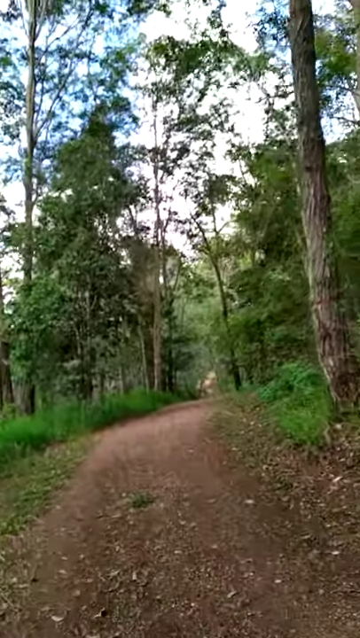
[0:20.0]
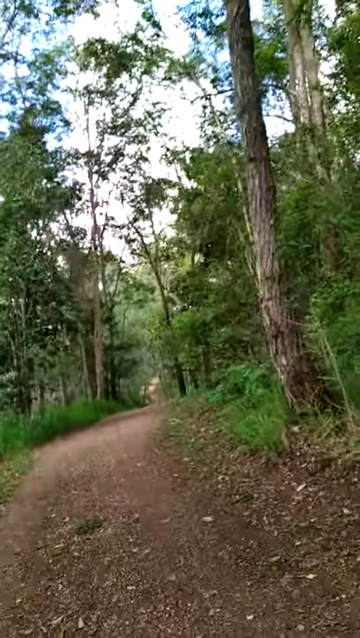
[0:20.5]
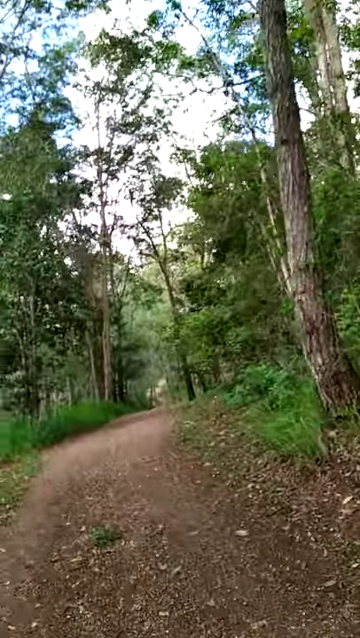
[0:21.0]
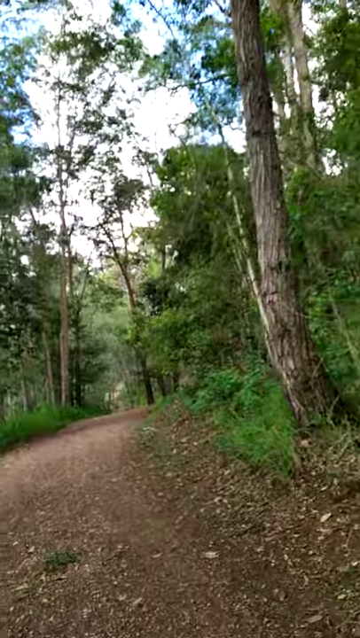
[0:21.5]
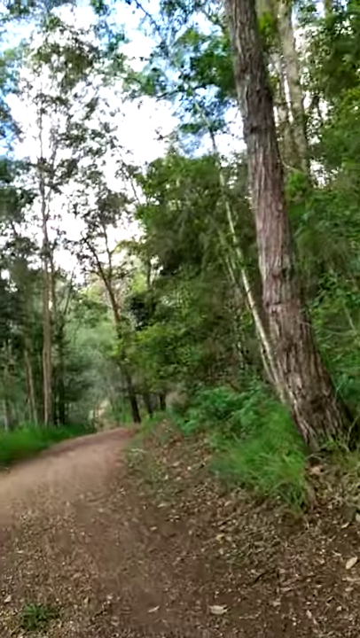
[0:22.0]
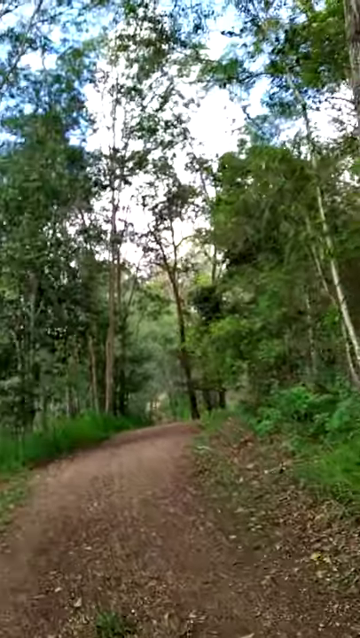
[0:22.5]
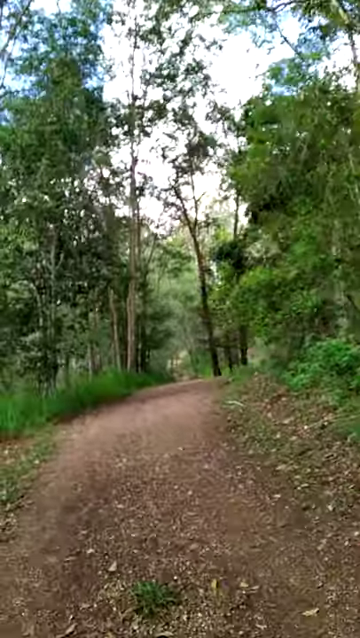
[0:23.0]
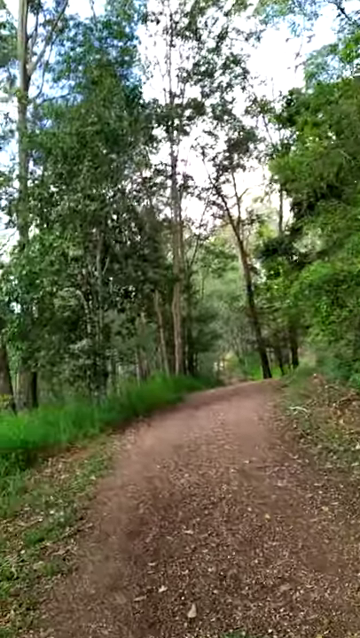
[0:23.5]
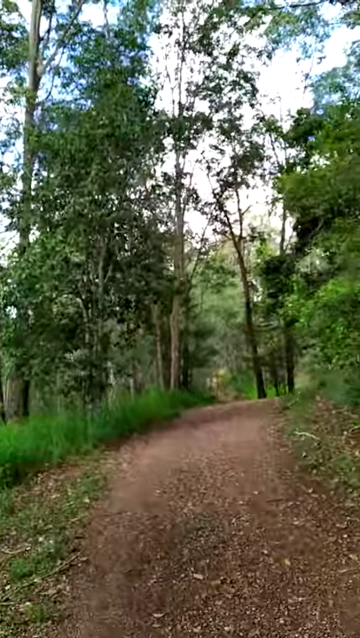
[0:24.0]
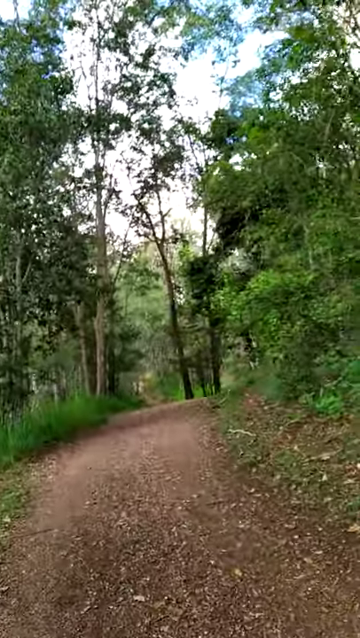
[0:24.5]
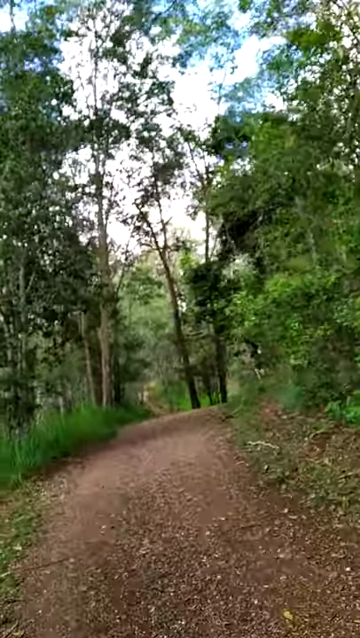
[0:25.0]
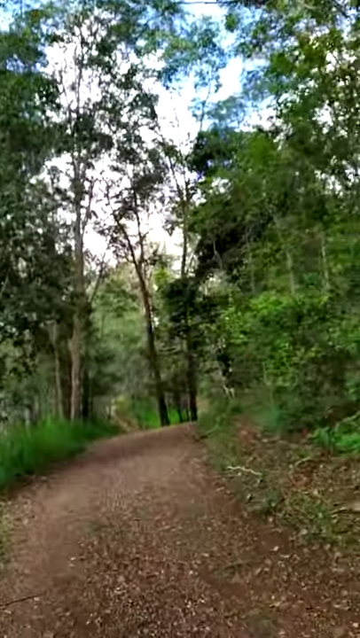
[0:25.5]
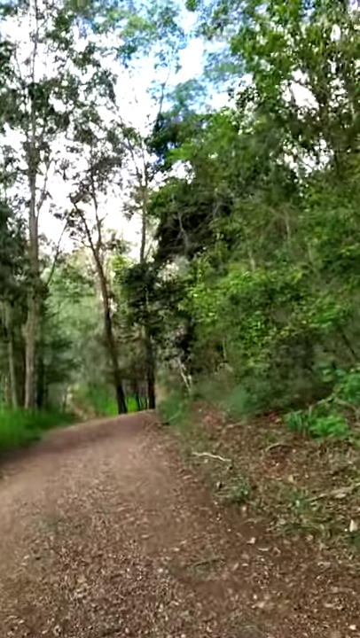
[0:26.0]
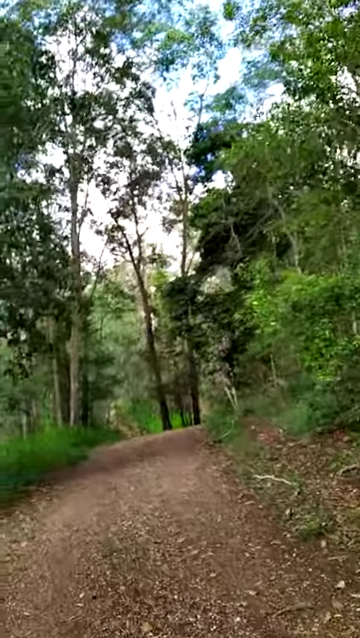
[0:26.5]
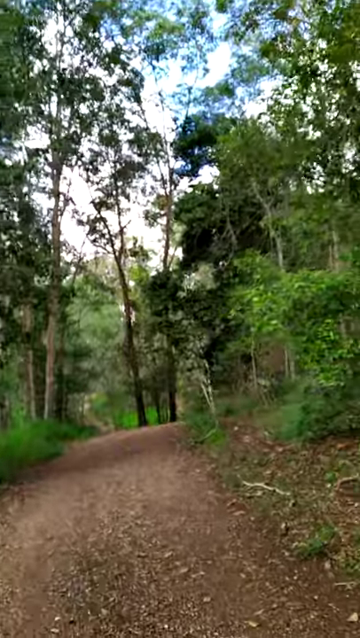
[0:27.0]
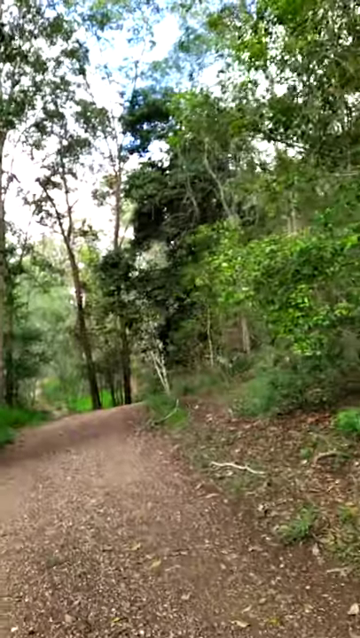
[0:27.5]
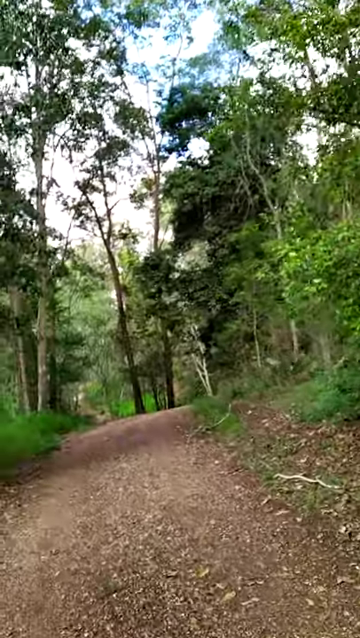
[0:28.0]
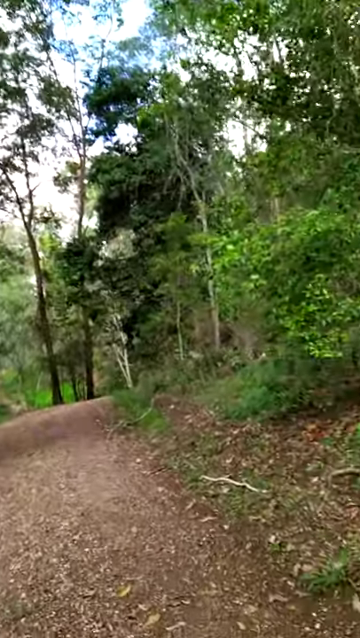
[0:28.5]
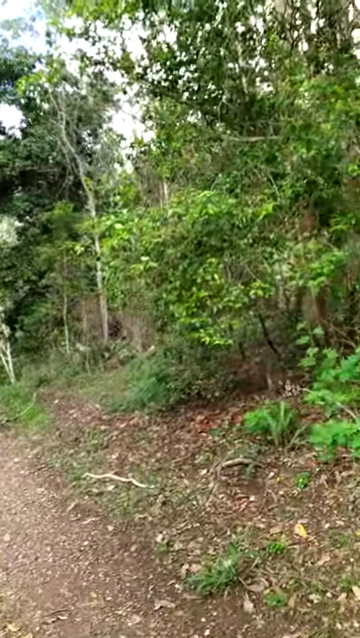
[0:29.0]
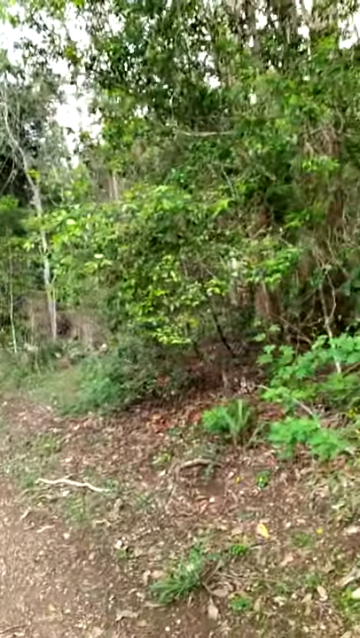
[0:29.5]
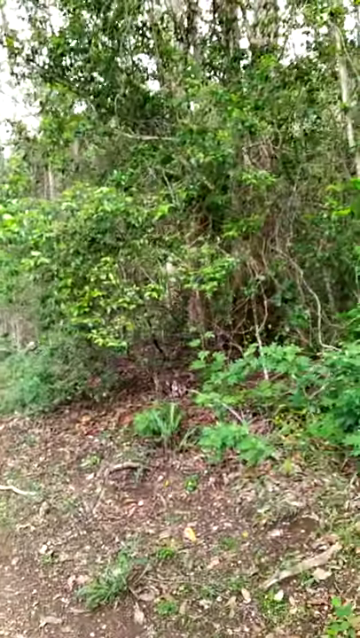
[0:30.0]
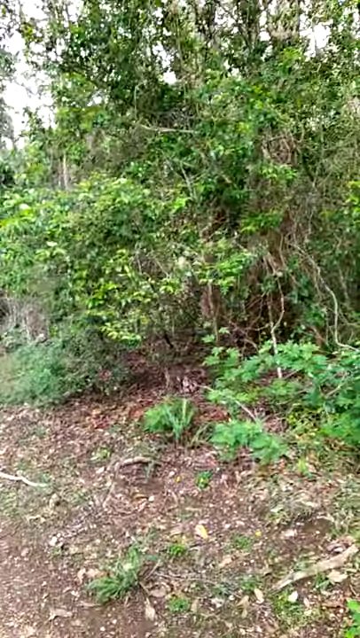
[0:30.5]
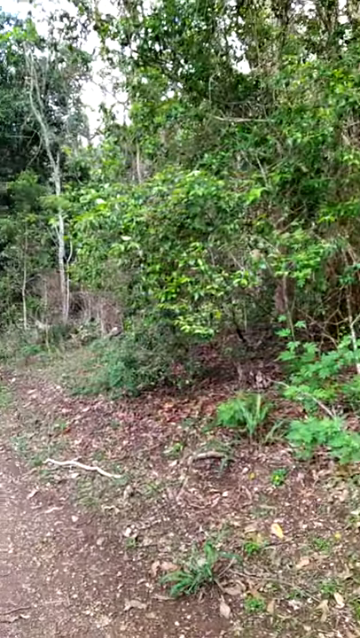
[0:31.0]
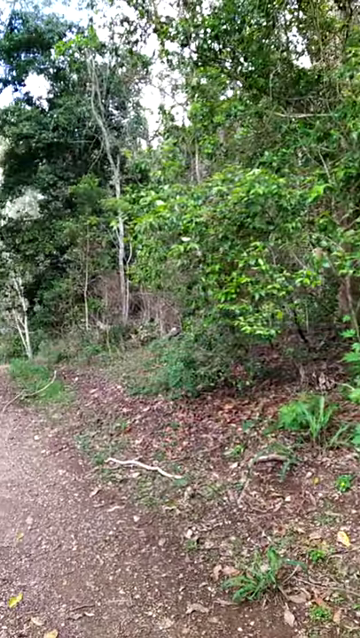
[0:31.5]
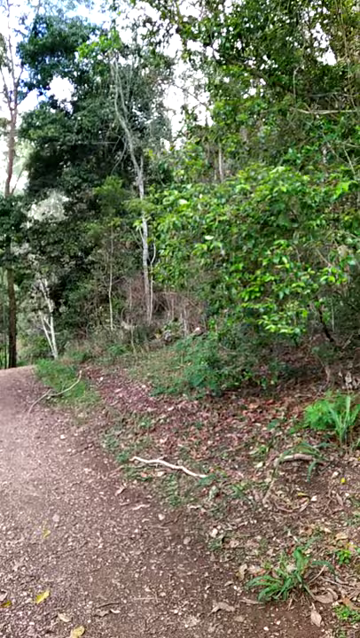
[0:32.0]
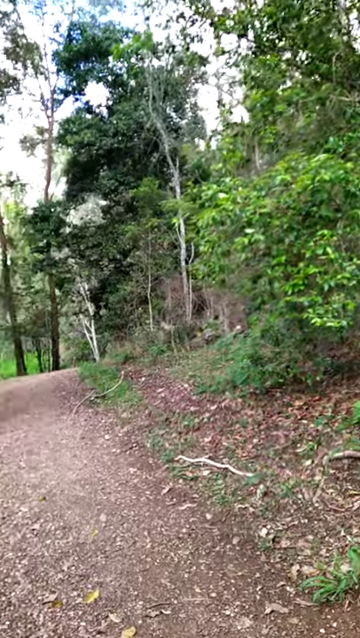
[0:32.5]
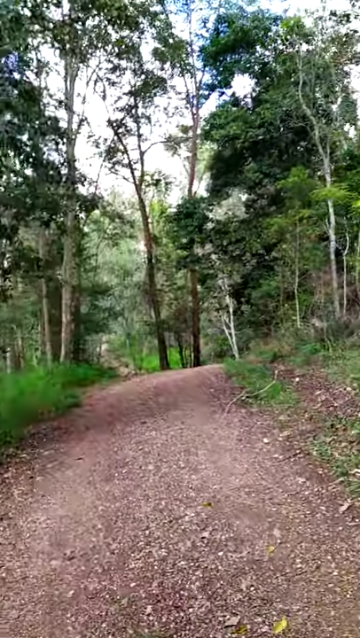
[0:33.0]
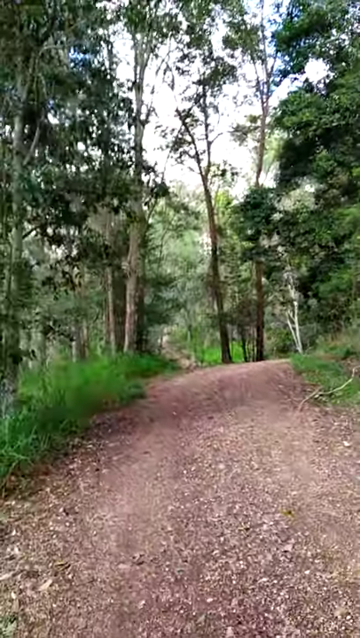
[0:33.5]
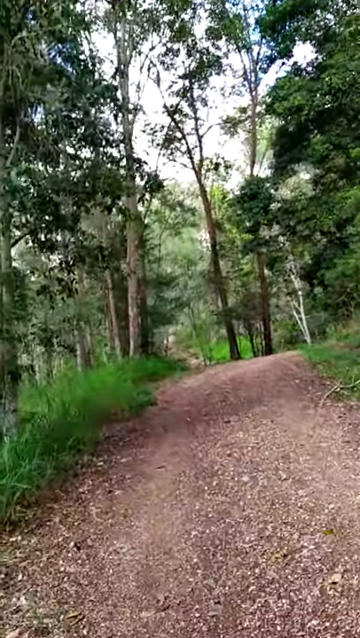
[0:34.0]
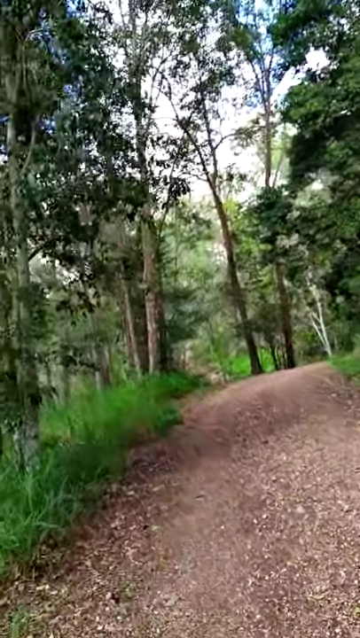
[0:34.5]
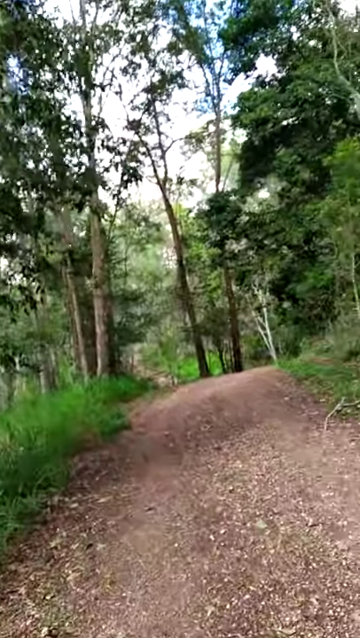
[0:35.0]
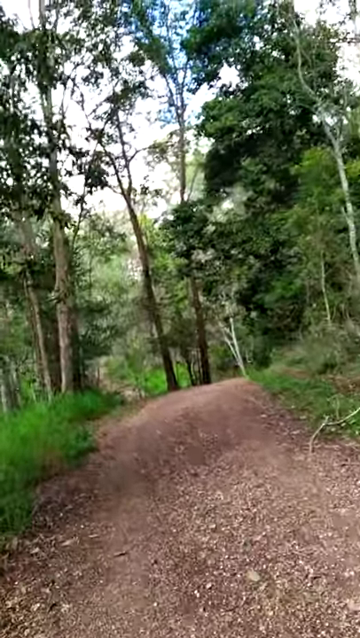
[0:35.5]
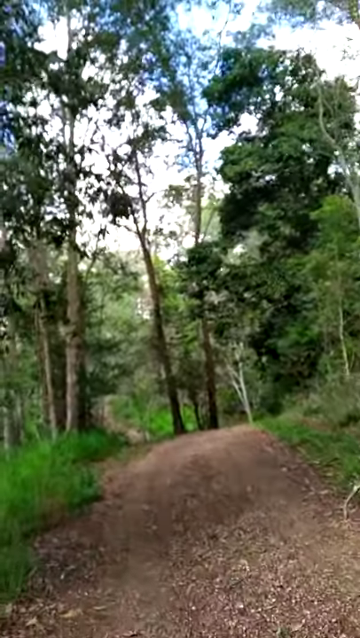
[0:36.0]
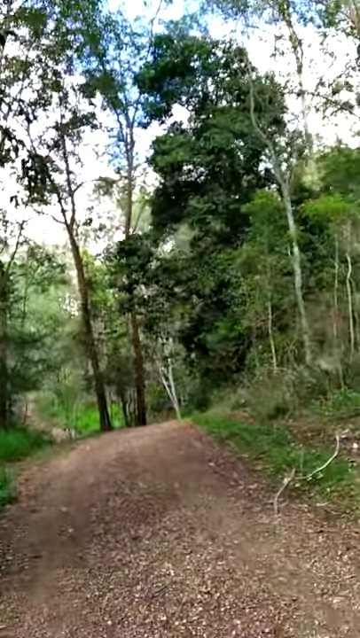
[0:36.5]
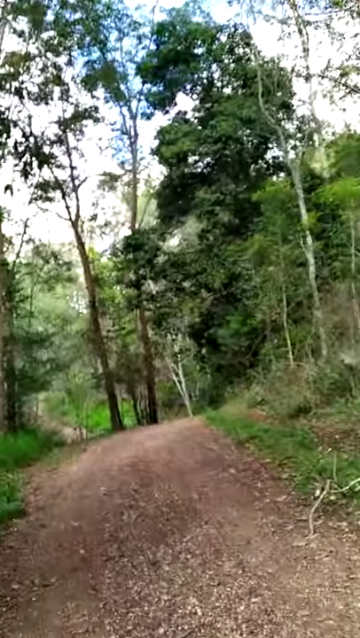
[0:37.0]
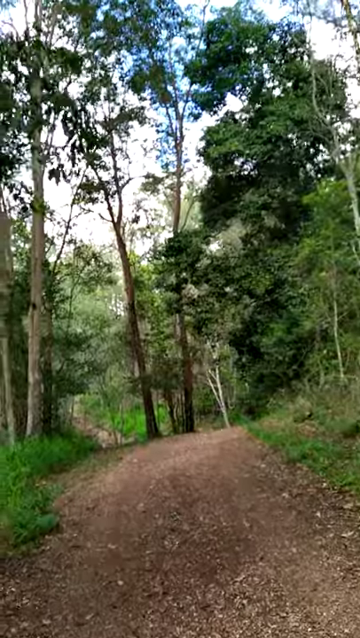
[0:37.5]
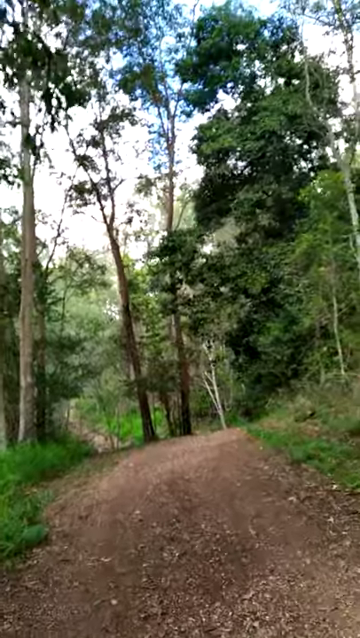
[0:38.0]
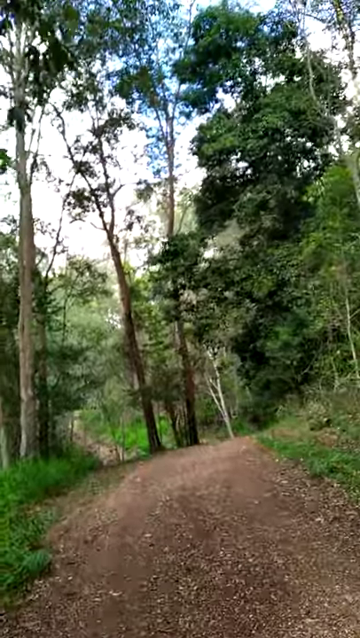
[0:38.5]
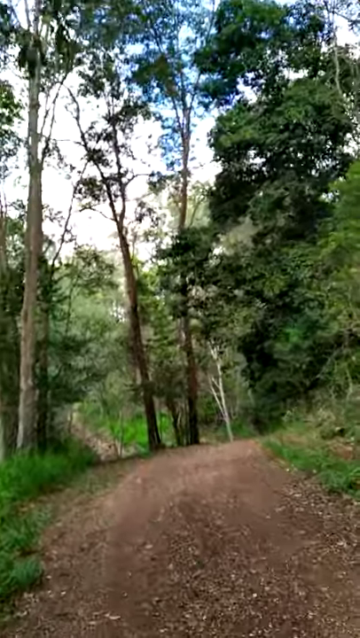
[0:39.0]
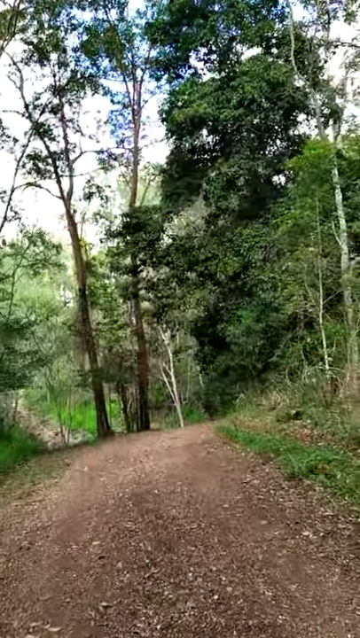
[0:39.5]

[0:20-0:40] From a first-person perspective, someone walks on a narrow dirt path through a forested area. It seems to be daytime, with a bright white sky peeking out through the canopy of tree leaves and branches. Lots of bright green bushes and plants line the dirt path. The person walks slowly while filming, at times slowing down and panning the camera around the area. The colours are mostly various shades of green, along with browns from the dirt path and the tree trunks. The weather seems calm, with not much motion in the tree leaves from wind.